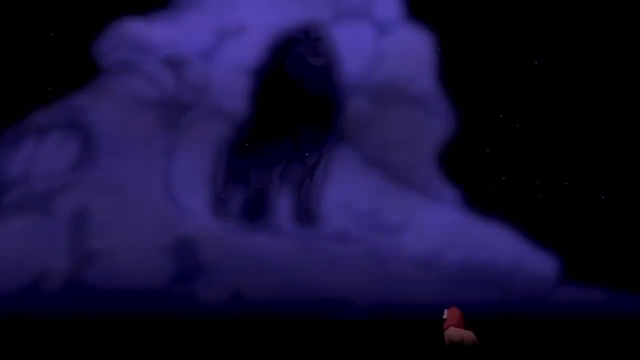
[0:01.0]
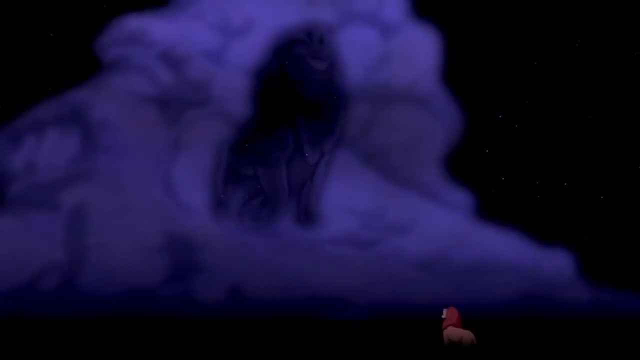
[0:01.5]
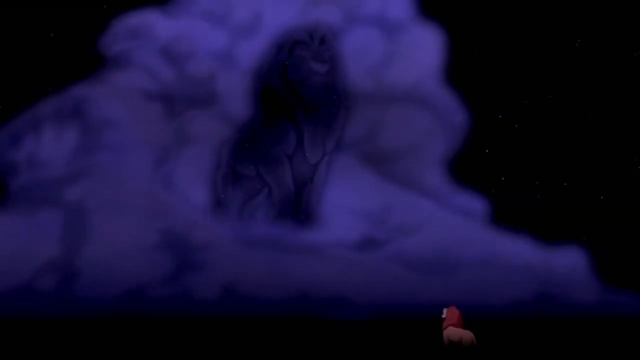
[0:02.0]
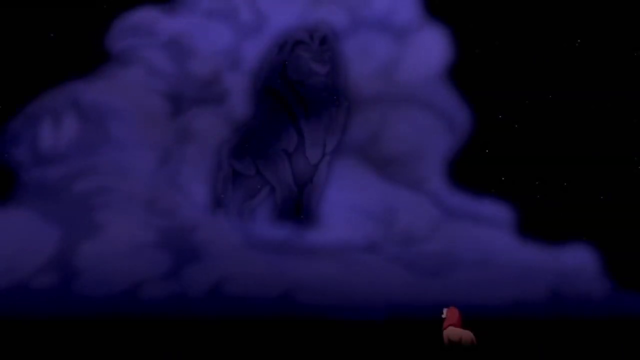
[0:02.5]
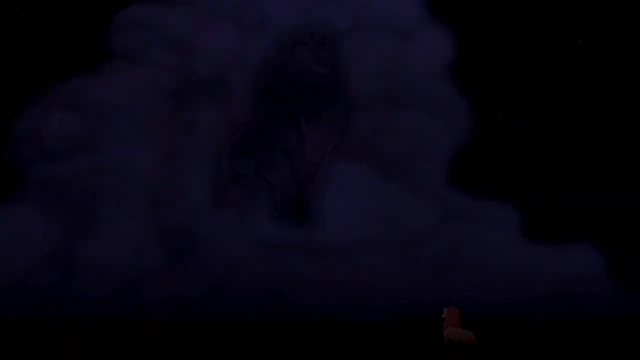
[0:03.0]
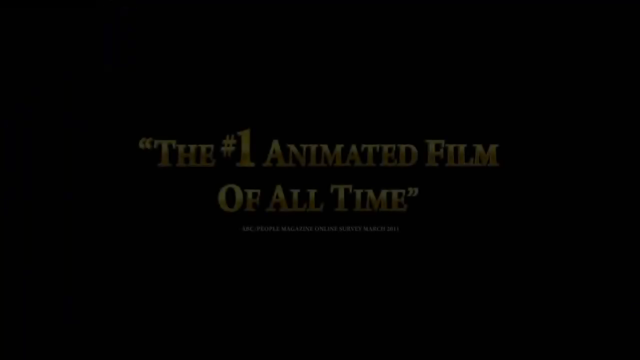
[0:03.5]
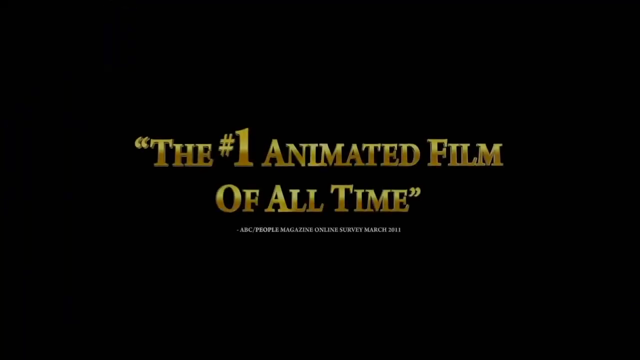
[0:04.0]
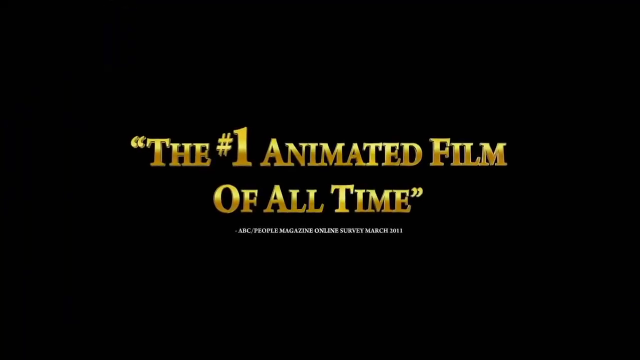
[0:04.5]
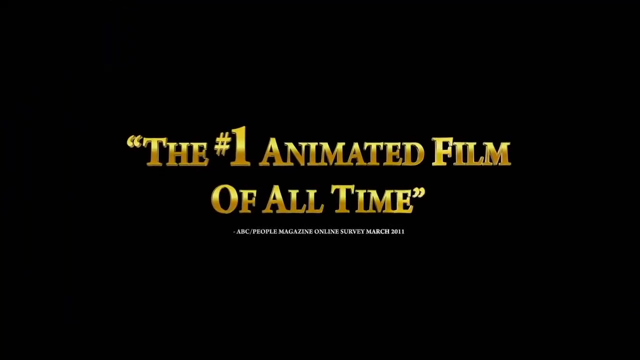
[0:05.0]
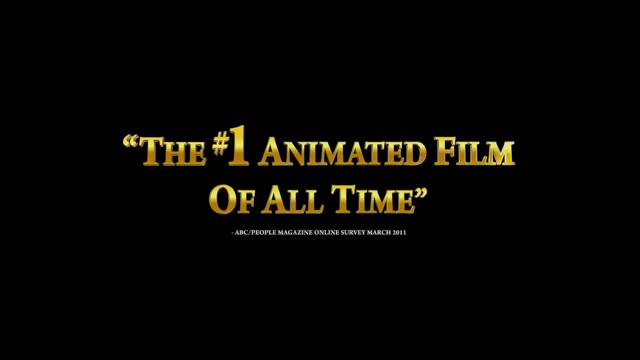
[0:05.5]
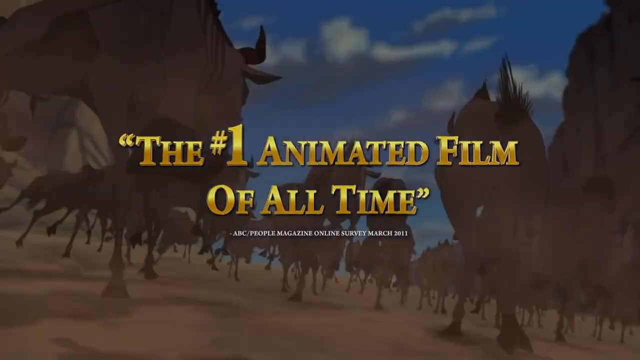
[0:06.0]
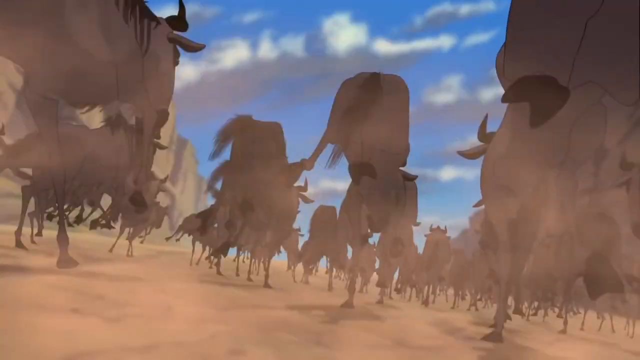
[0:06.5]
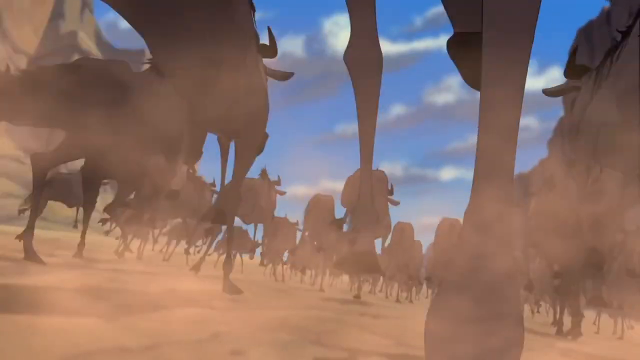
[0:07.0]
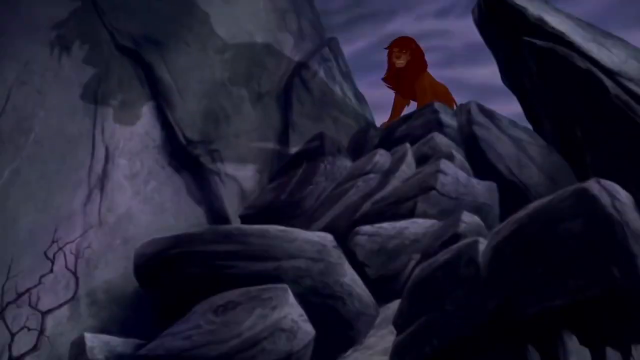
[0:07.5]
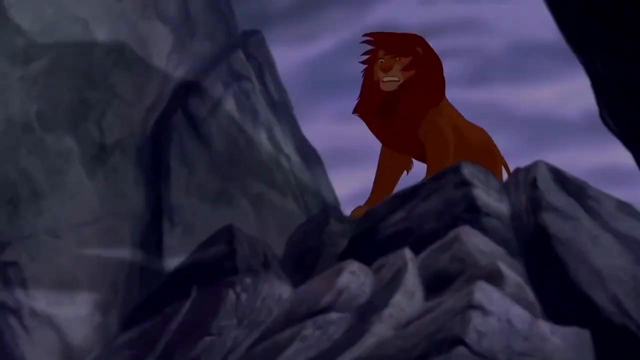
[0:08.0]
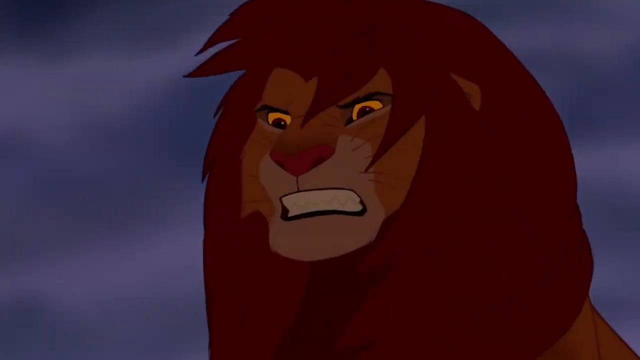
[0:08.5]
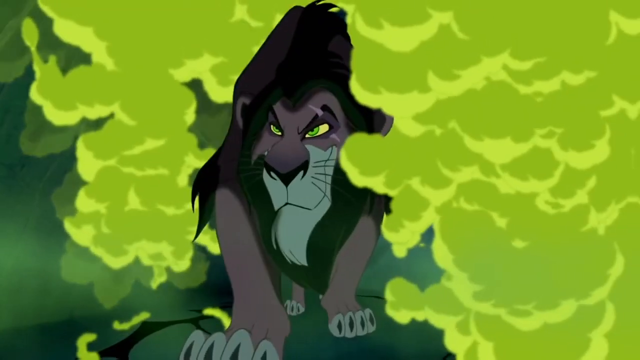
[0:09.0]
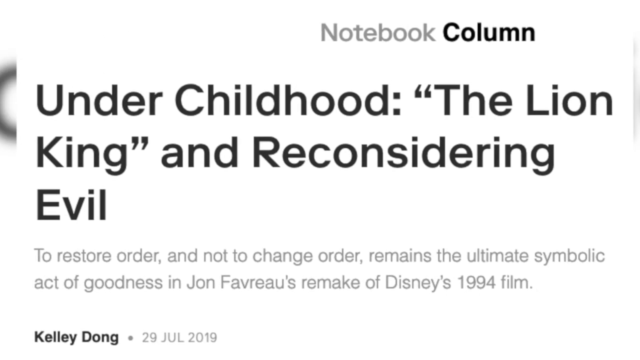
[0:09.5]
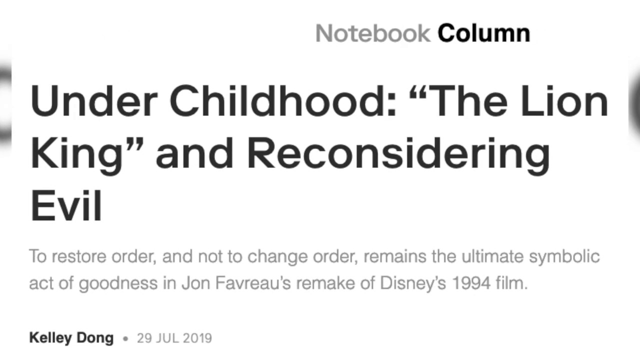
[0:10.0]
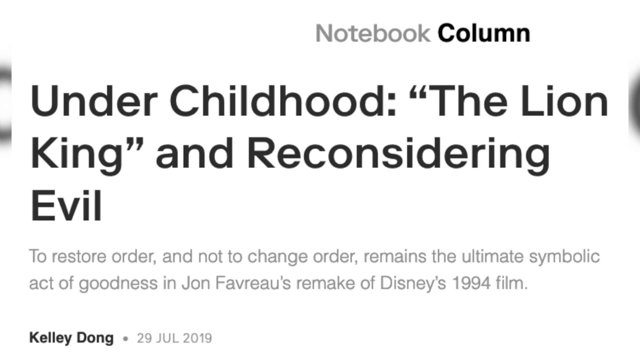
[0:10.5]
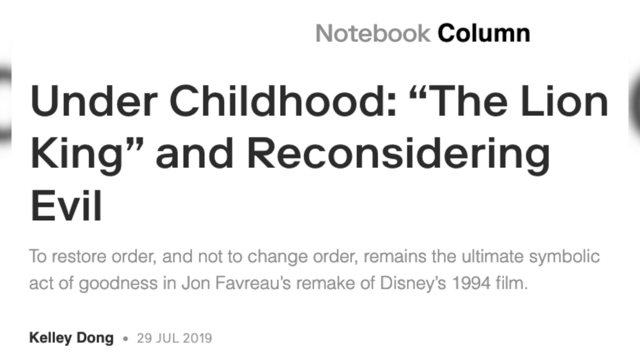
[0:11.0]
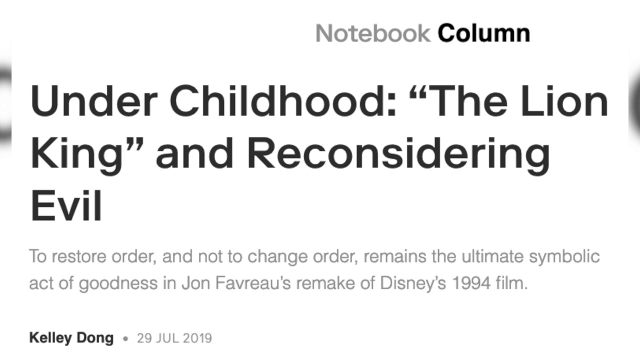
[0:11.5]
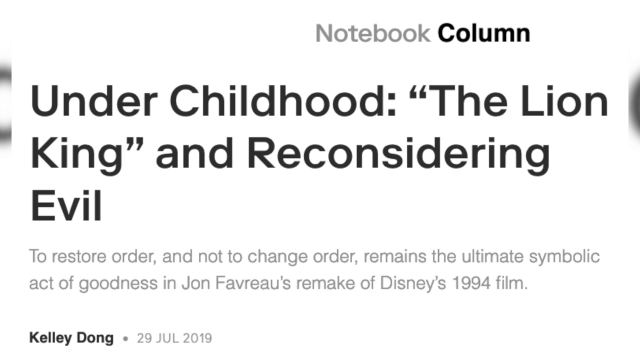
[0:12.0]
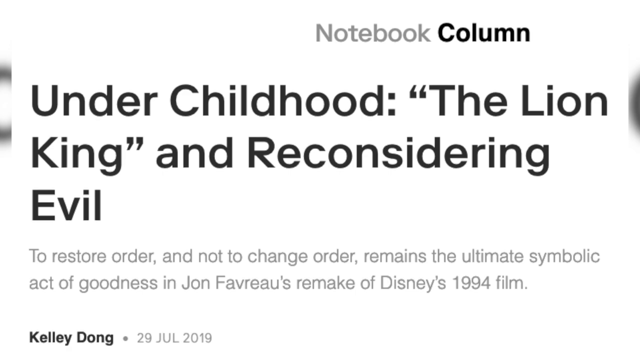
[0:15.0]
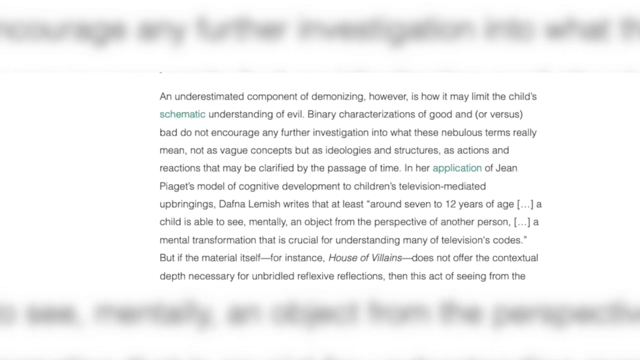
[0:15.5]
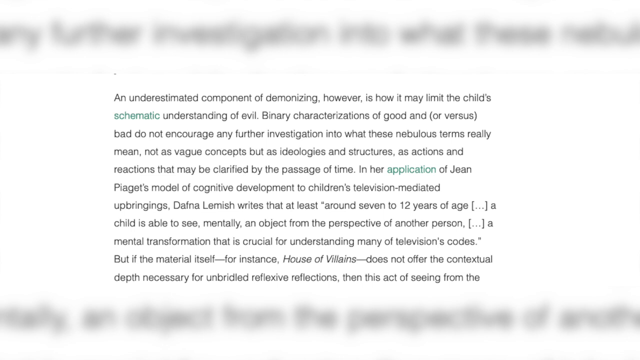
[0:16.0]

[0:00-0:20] The video opens on a black background with dark blue smoke over it. It then transitions to the words "the number one animated film of all time," written in gold, with a line below that reads "ABC People magazine, online survey March 2011." Next, a herd of animals is shown running away. A lion appears on top of a rocky hill, its hair waving in the wind, and the lion looks angry. A green cloud of smoke follows, and another lion with dark hair is shown looking angry. The video then shows text on a white background that mentions a "notebook column" and reads "under childhood, 'the Lion King' and reconsidering evil," followed by "to restore order and not to change order remains the ultimate symbolic act of goodness in John Favreau's remake of Disney's 1994 film." It transitions to additional text stating "an underestimated component of demonizing, however, is how it may limit a child's schematic understanding of evil," followed by a passage about binary characterization of good versus bad that begins "do not encourage any further investigation."